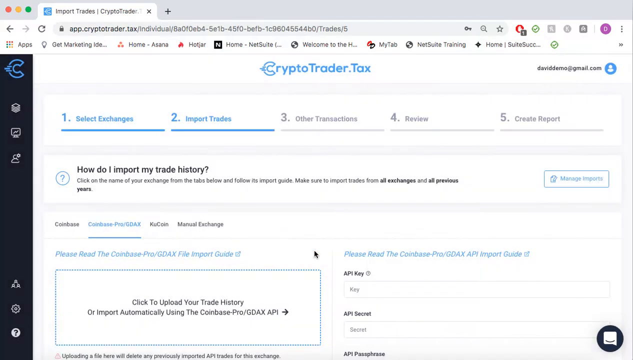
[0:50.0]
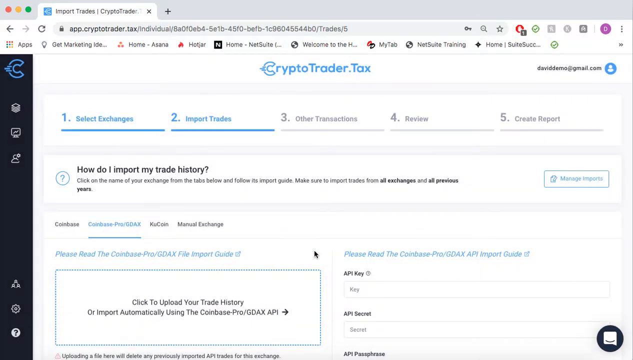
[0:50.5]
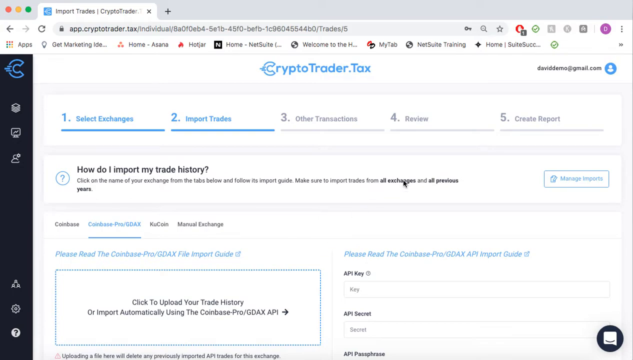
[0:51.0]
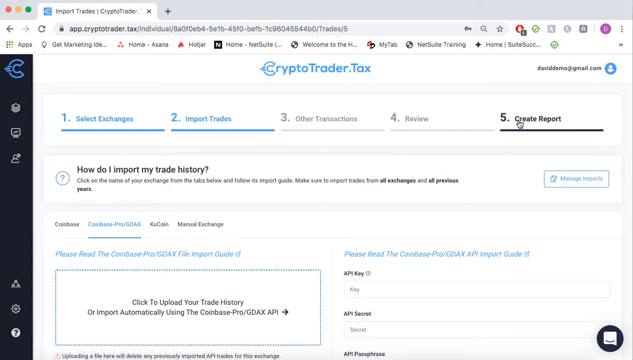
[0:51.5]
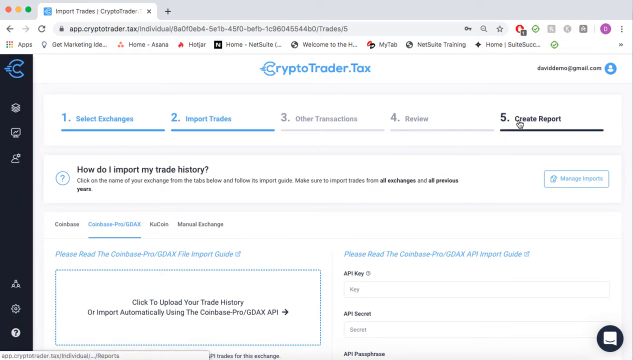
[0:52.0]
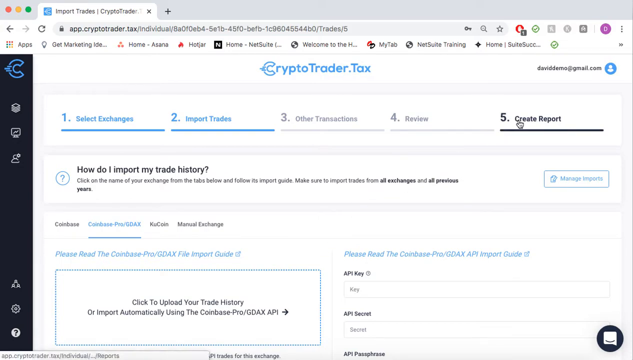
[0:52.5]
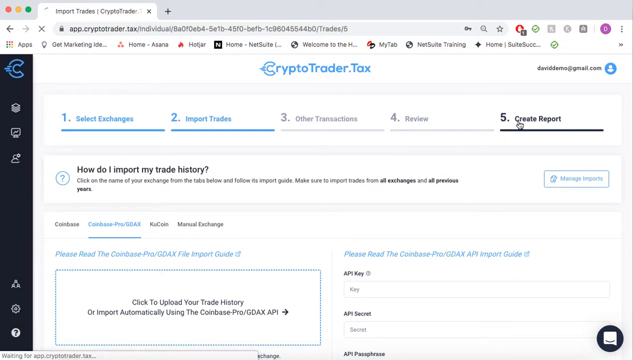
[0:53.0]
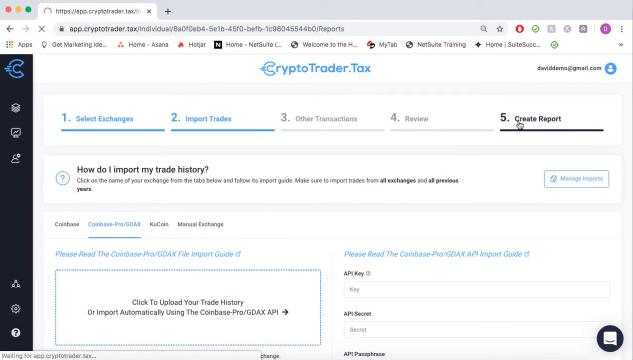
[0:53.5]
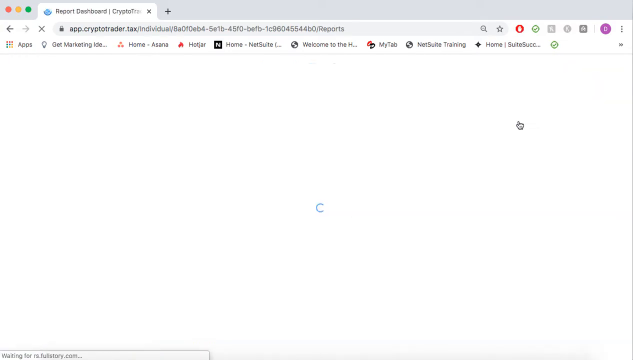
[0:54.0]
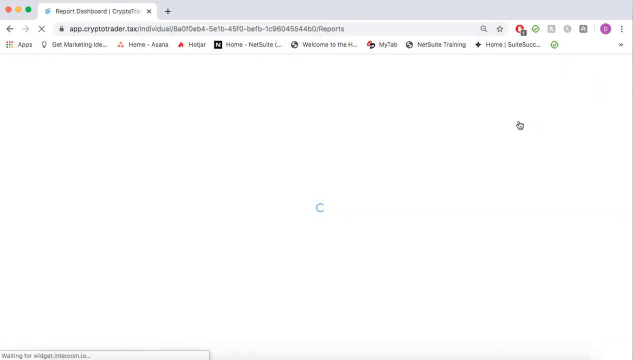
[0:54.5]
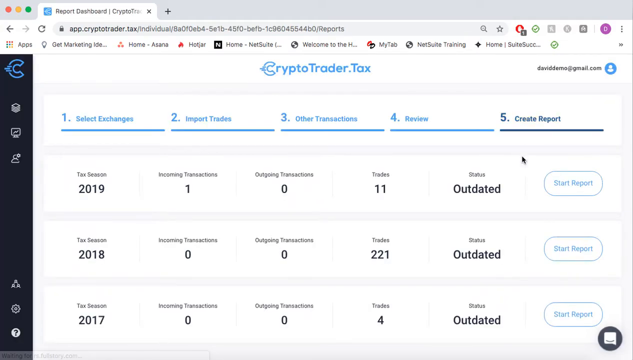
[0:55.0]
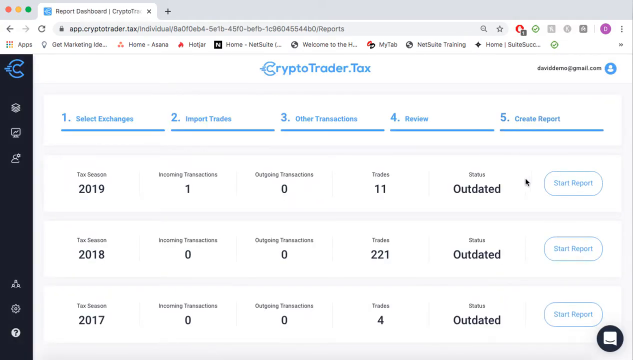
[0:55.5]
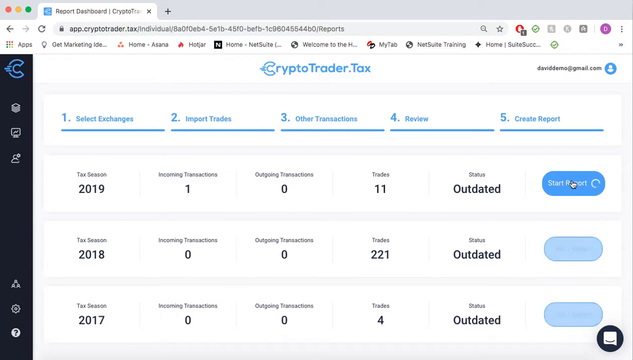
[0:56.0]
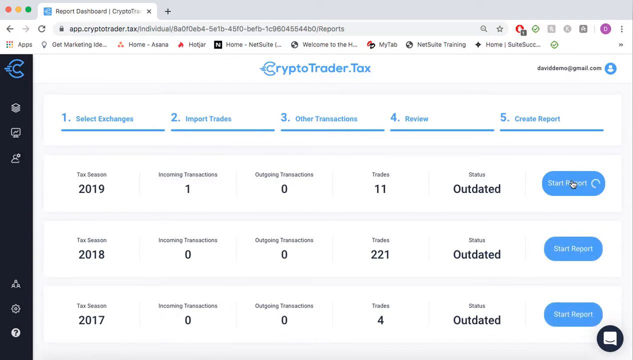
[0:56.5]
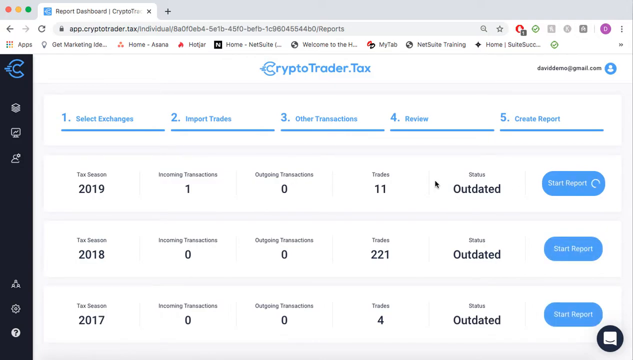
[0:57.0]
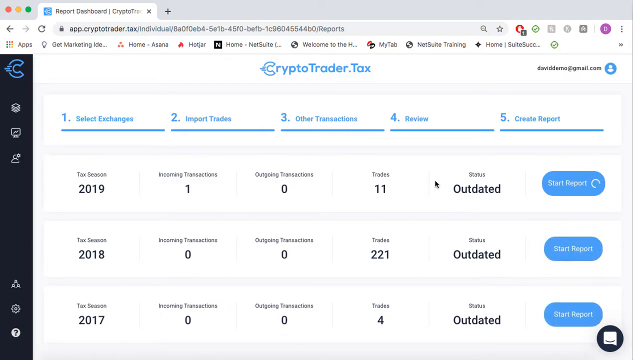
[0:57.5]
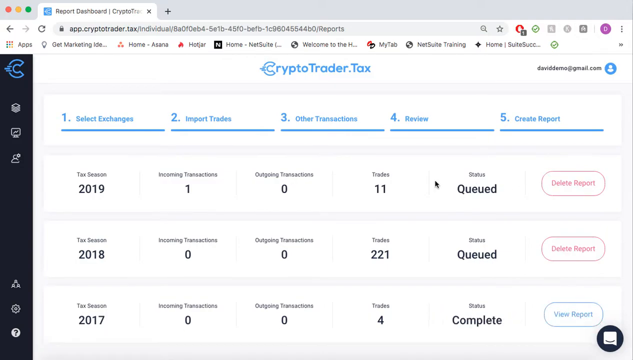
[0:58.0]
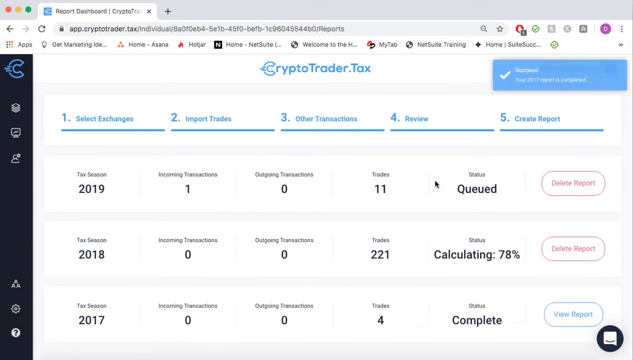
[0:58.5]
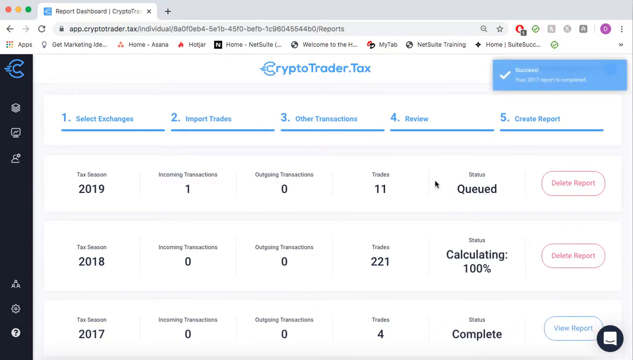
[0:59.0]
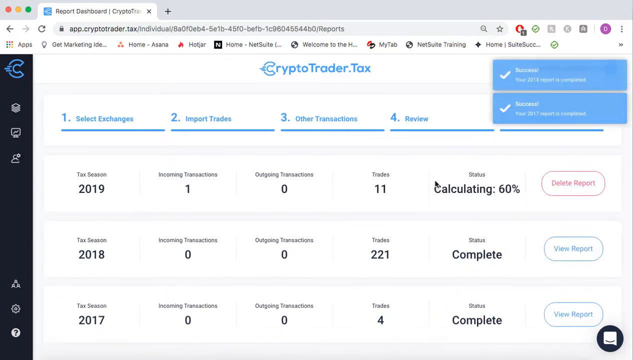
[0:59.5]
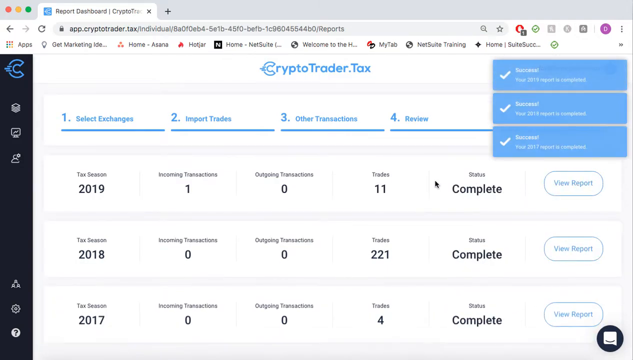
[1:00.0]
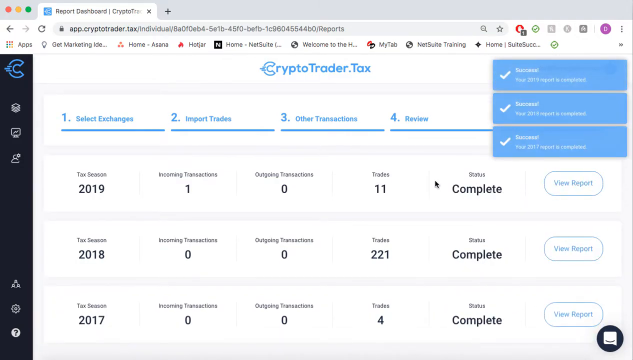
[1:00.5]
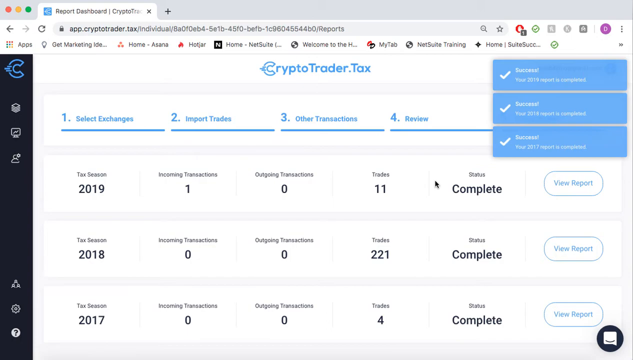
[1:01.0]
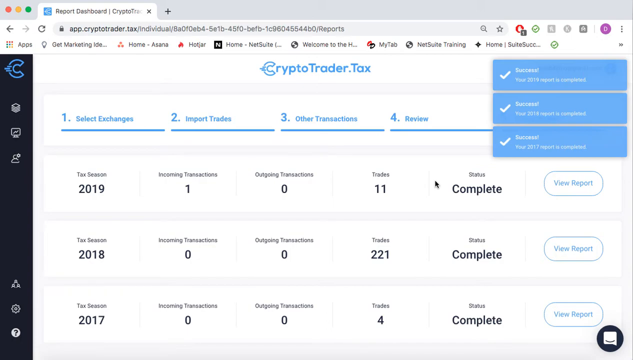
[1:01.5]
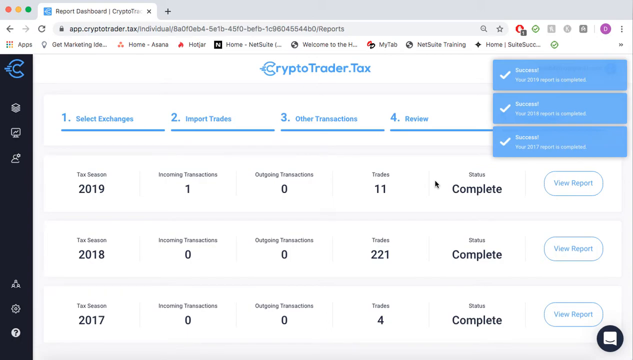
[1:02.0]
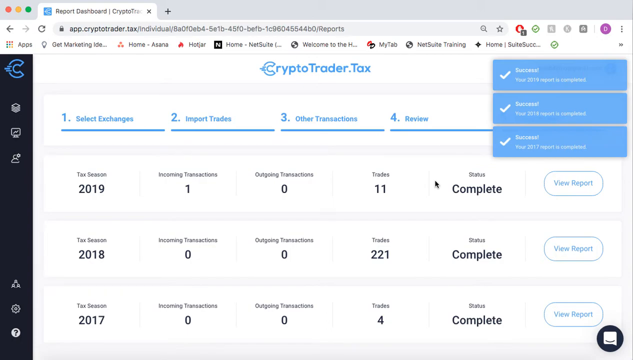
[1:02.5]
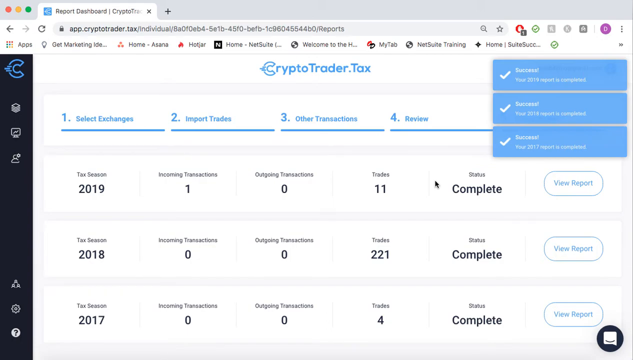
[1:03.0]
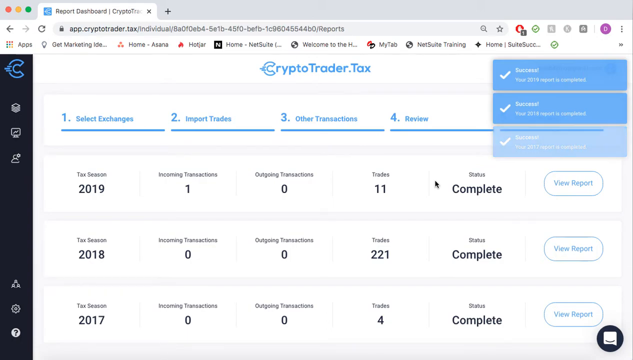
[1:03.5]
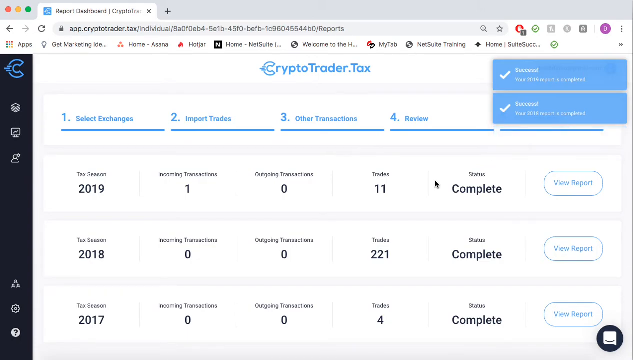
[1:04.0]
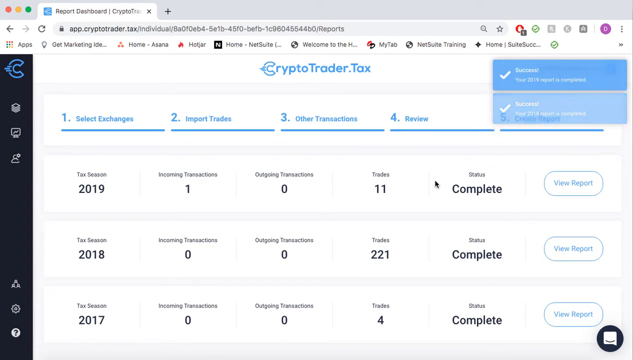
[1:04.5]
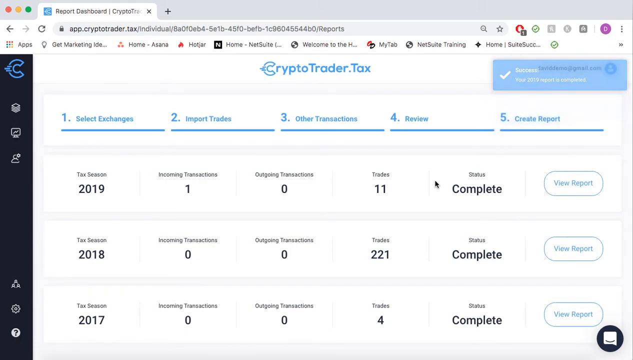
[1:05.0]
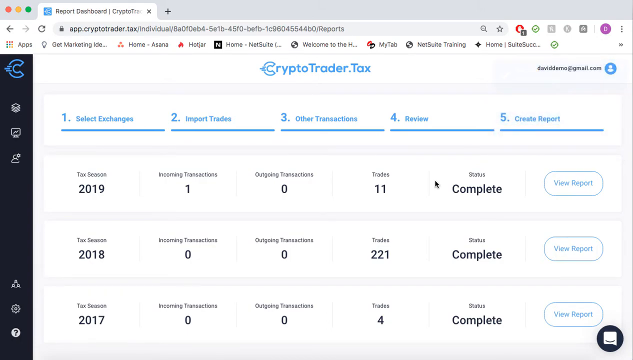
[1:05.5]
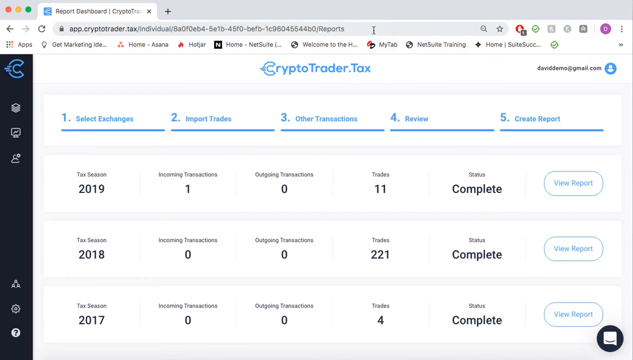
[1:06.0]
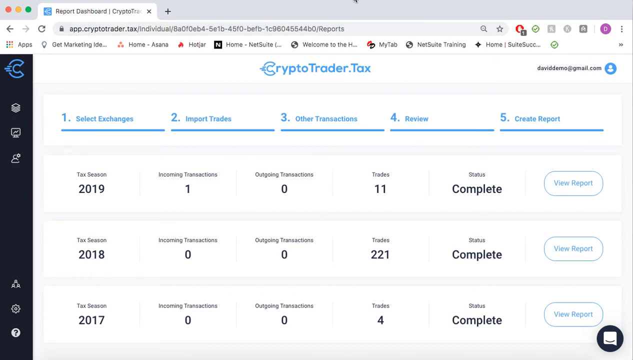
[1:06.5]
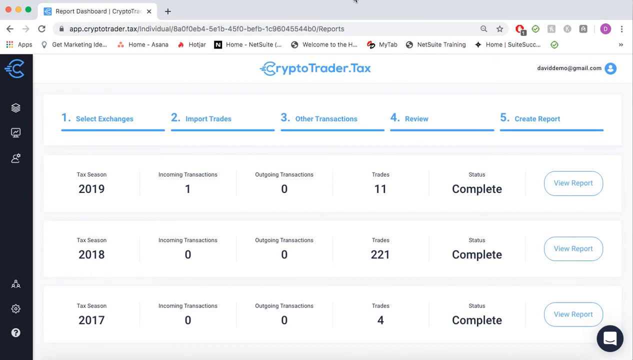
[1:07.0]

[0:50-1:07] The user skips the "Other Transactions" and "Review" options and goes straight to the last one, clicking a button that says "Start Report". Reports then appear by tax season: the 2019 tax season shows a transaction to come, 0 transactions to leave, 11 trades and a complete status; the 2018 tax season shows 0 transactions to come, 0 to leave, 221 trades and a complete status; and the 2017 tax season shows 0 transactions to come, 0 to leave, 4 trades and a complete status. Each has a button on the right that says "View Report". At the top right, notifications appear in blue rectangles with a dot and white text that says "Successful. Your reports for 2019, 2018, and 2017 have been completed."